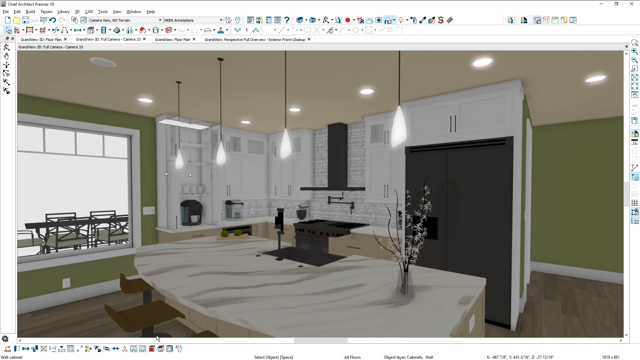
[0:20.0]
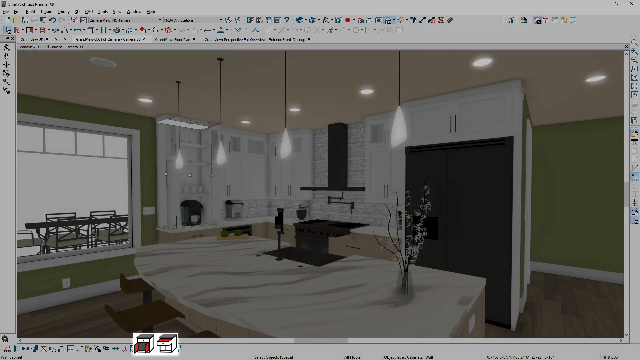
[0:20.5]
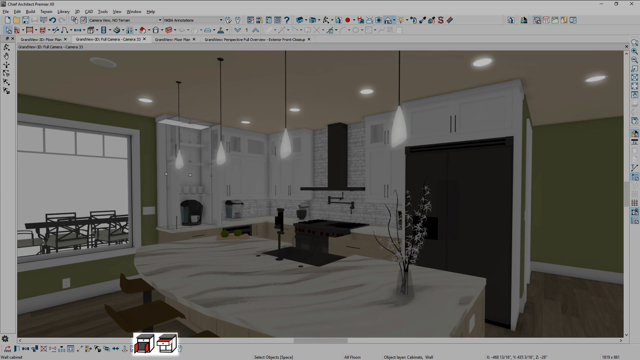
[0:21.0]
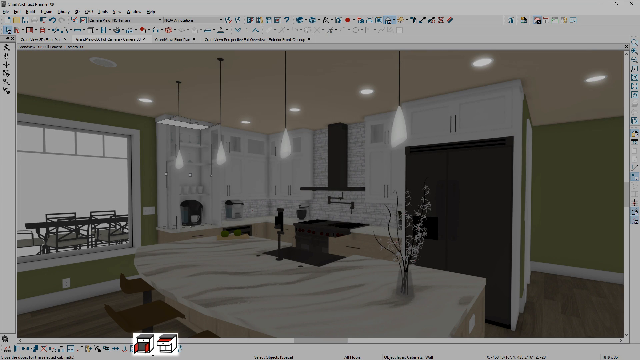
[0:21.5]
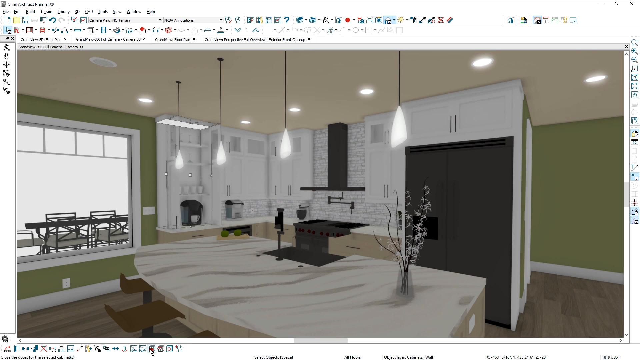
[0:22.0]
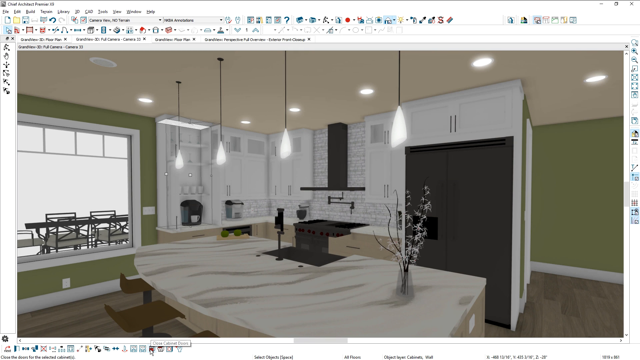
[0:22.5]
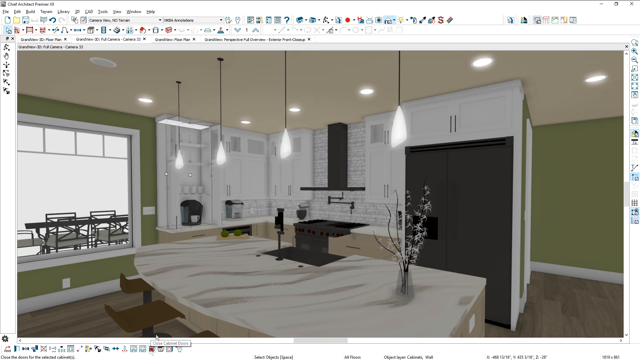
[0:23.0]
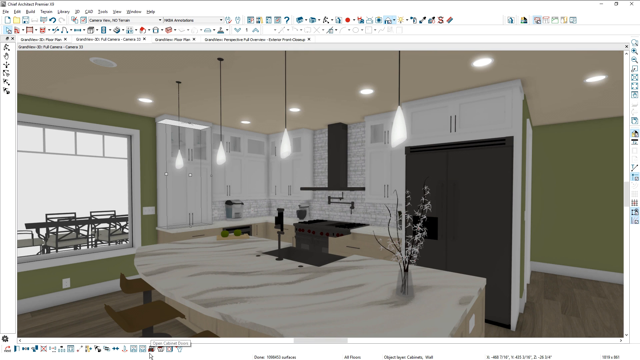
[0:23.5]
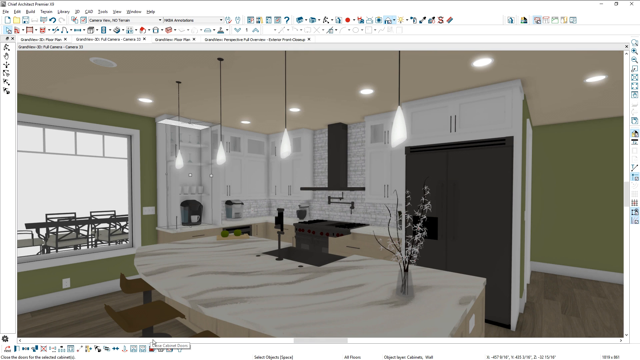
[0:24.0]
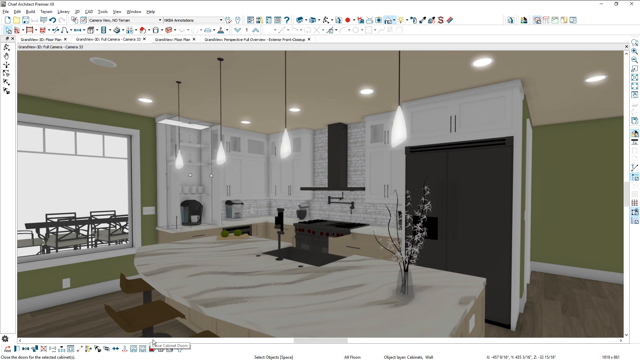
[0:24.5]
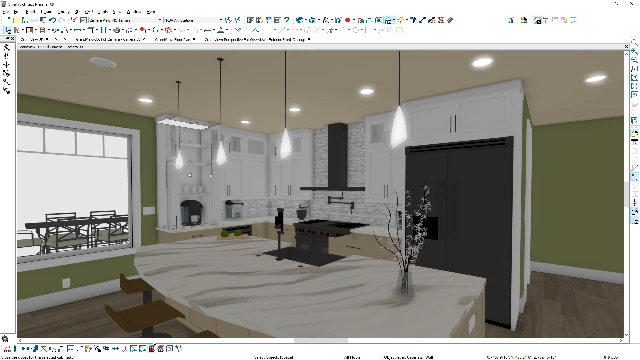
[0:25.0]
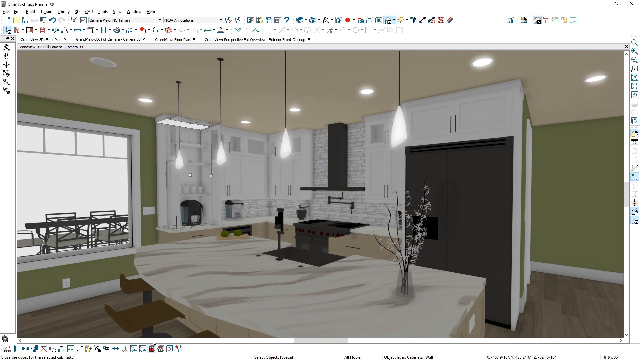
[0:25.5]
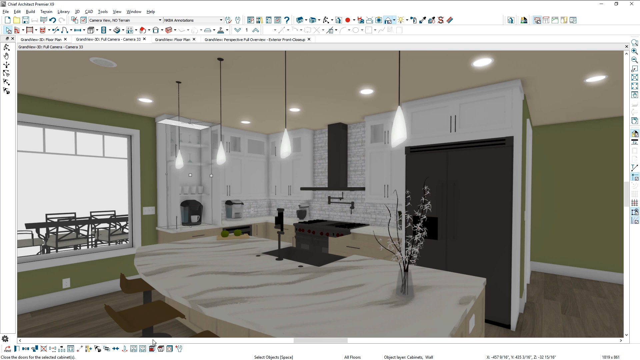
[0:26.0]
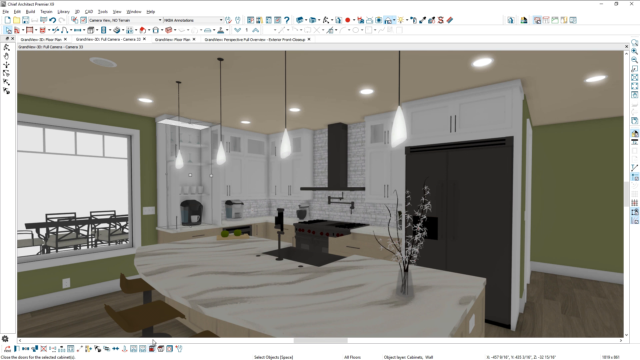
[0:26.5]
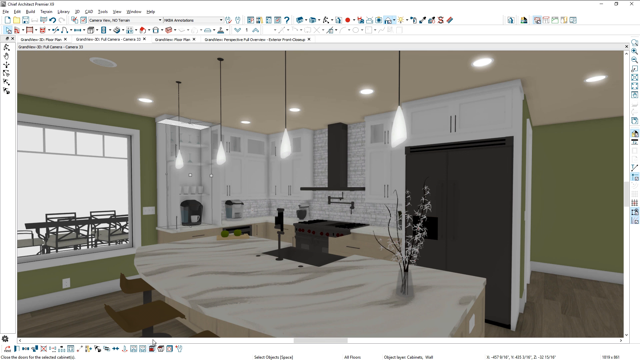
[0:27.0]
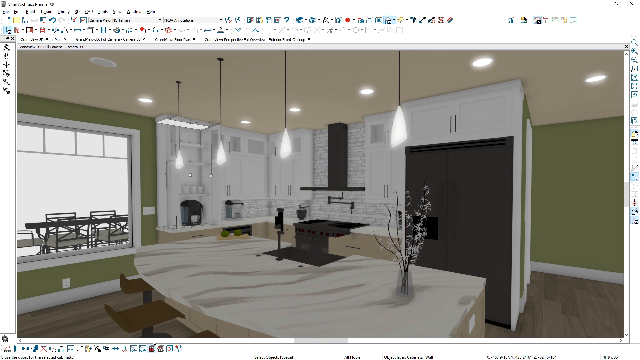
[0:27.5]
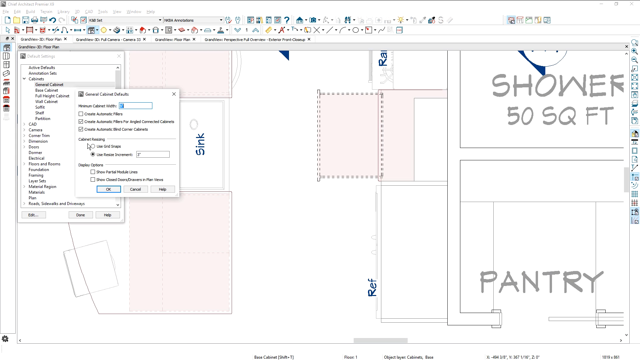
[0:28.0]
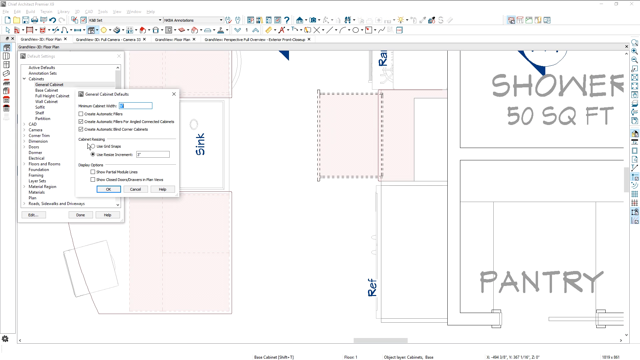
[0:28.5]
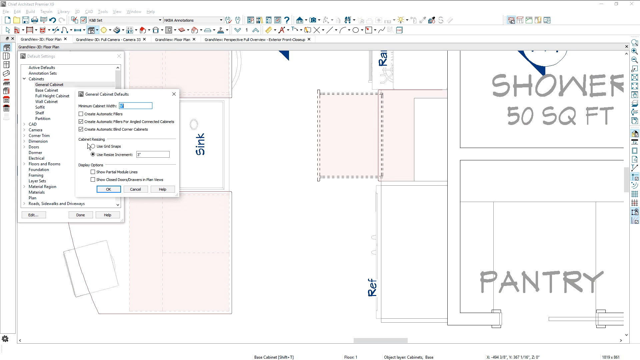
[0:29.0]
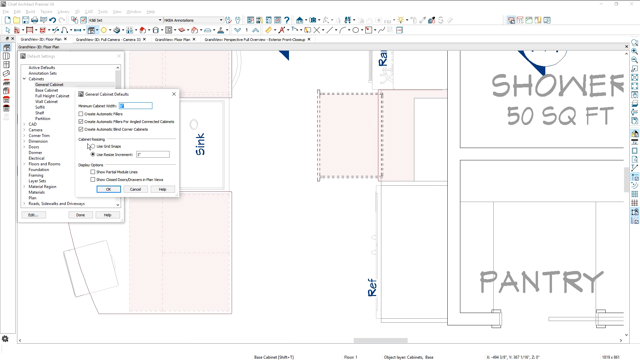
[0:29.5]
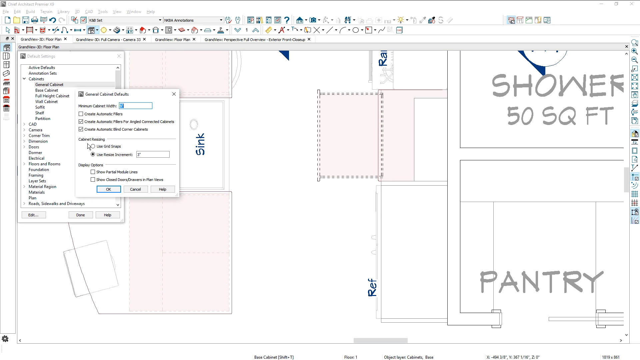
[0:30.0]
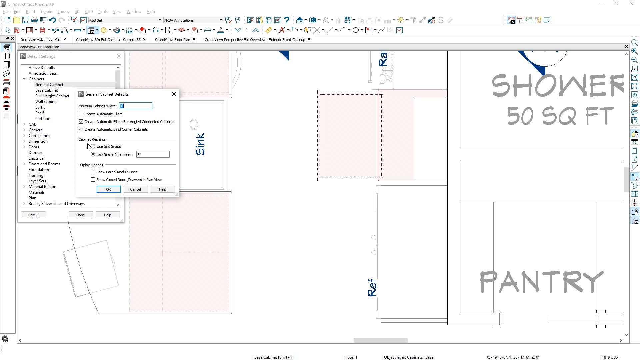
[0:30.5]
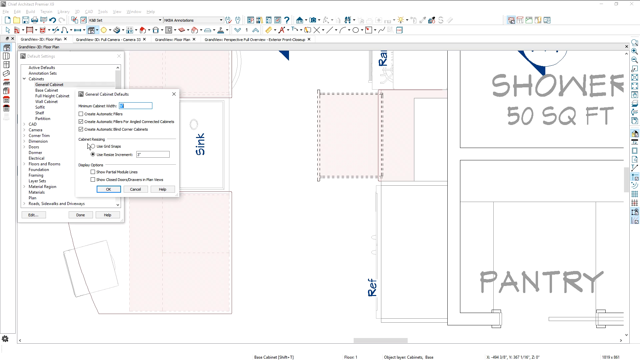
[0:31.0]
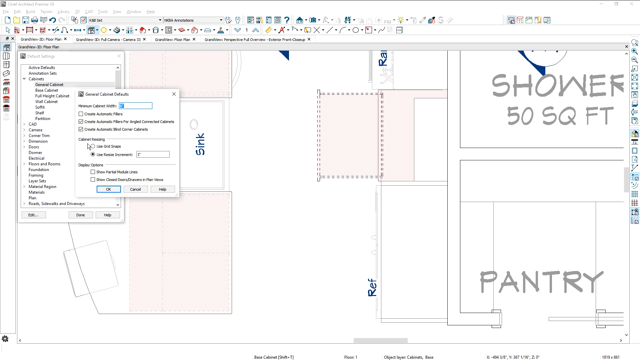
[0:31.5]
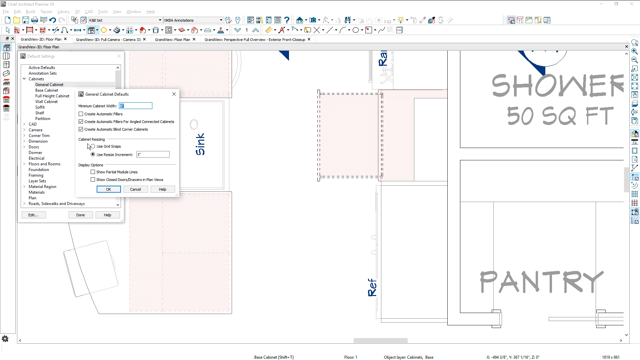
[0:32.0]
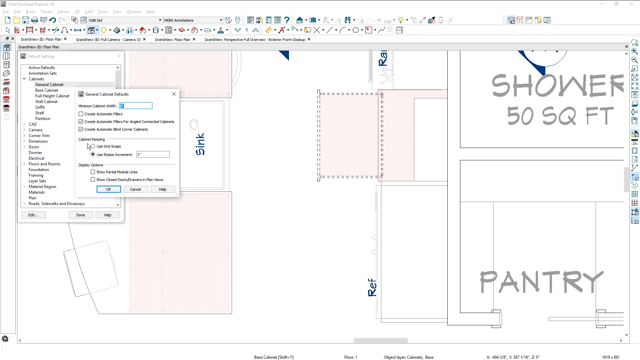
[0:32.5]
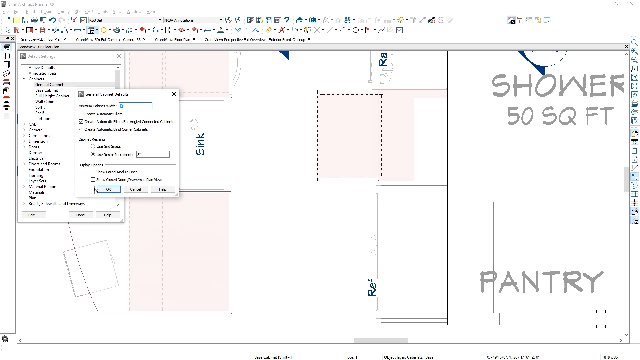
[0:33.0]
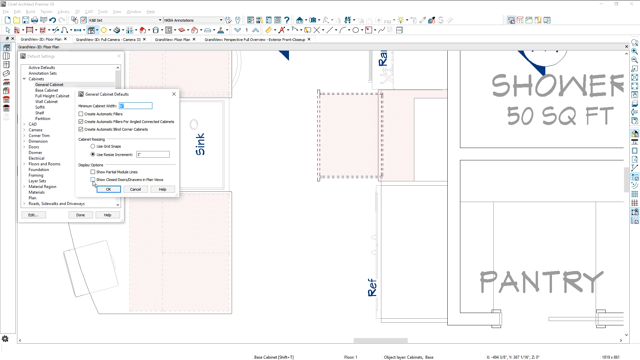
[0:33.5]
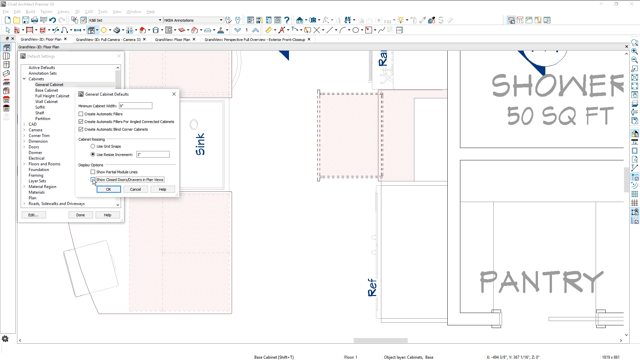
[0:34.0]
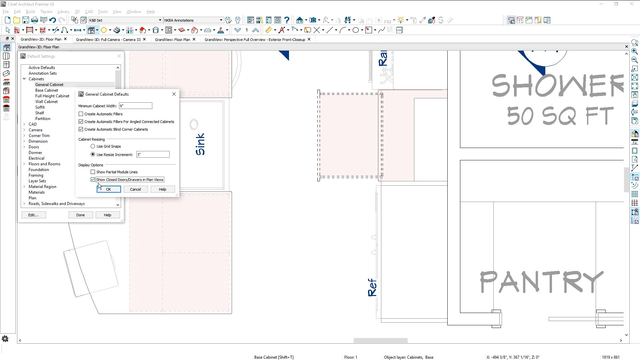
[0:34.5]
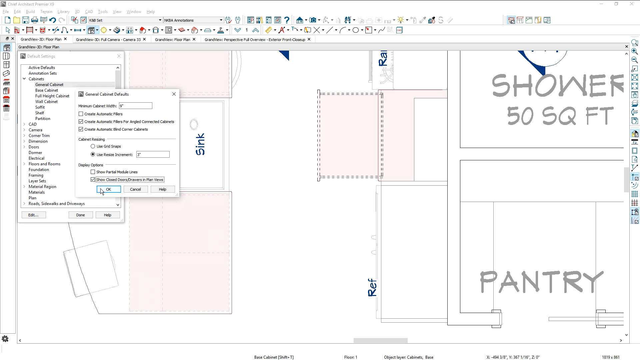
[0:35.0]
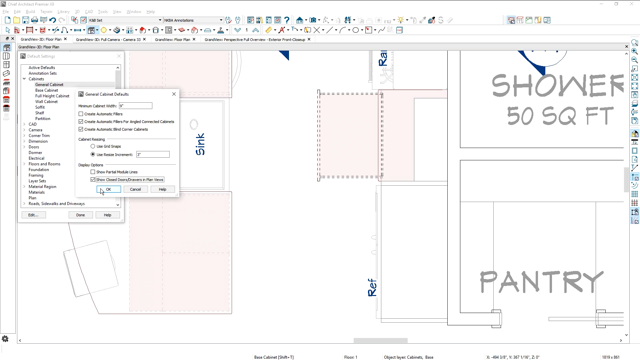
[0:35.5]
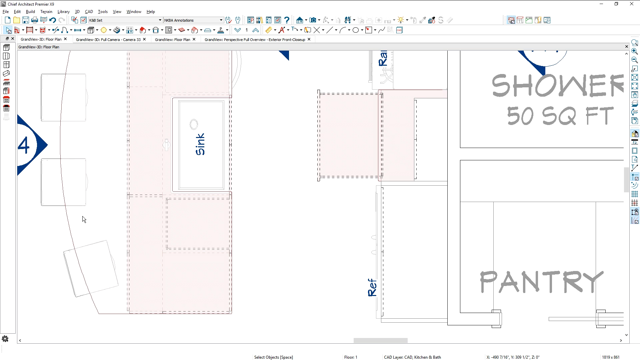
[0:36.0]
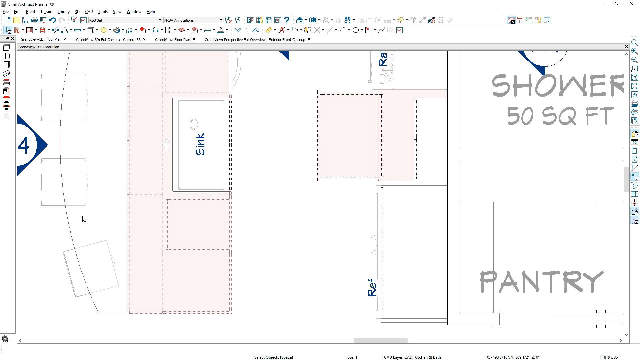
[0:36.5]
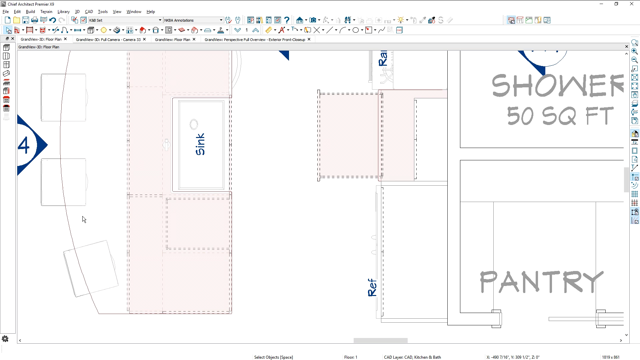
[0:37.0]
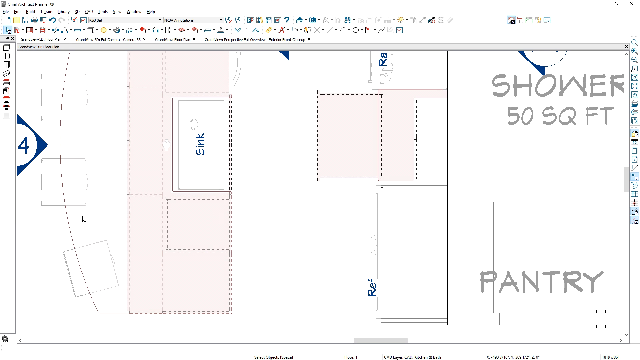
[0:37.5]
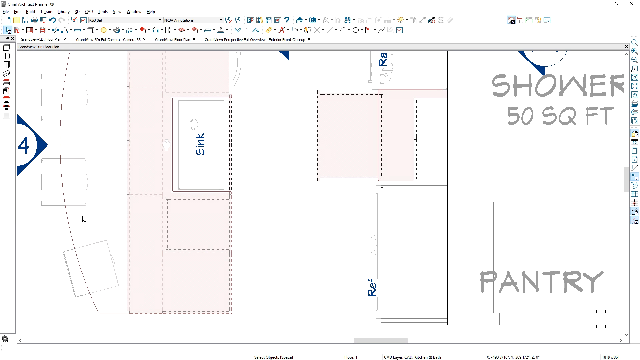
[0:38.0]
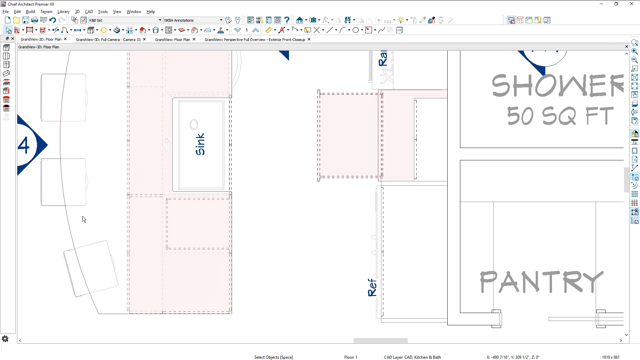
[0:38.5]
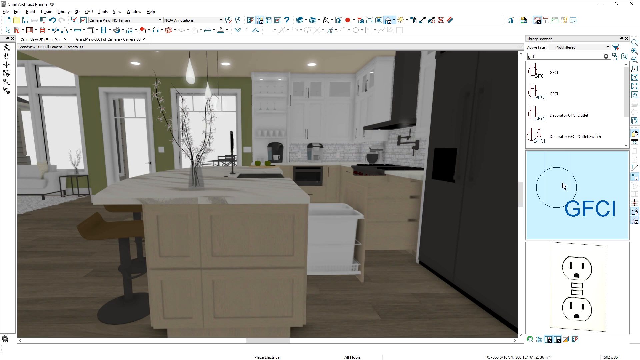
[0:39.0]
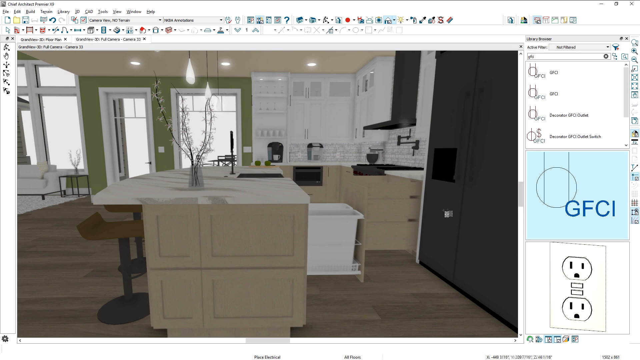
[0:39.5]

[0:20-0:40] A house plan with a kitchen appears, along with a black and white kitchen. There is a glimpse of what look like bar stools outside, a mirror, a light in the middle of the table, a coffee maker, a huge black two-door fridge that looks like a walk-in fridge, and a black gas stove. On the house plan there is a shower of 50 square feet, with a pantry right opposite. Beyond it there is a passage, a sink straight ahead, two bedrooms opposite, an en suite, and a kitchen on the far left.